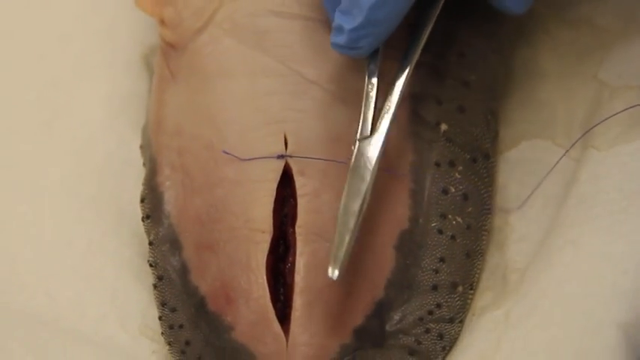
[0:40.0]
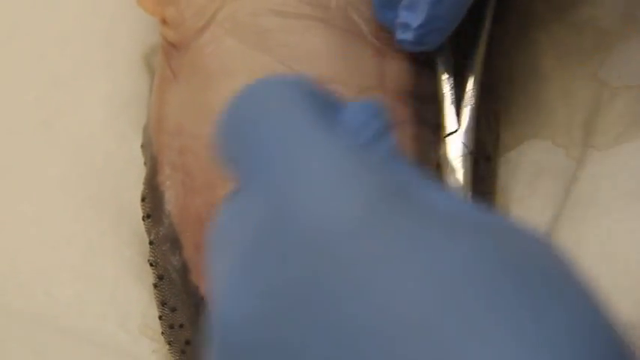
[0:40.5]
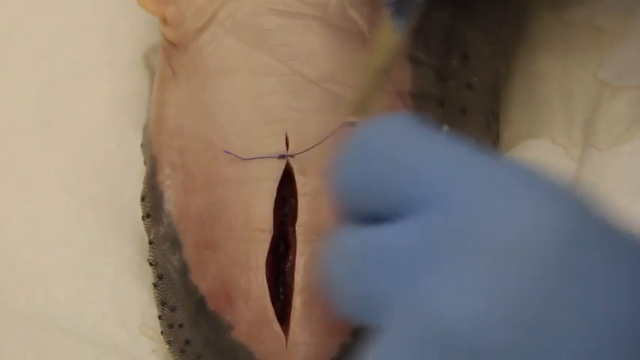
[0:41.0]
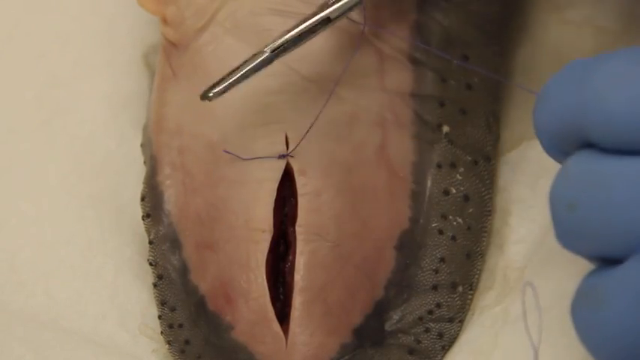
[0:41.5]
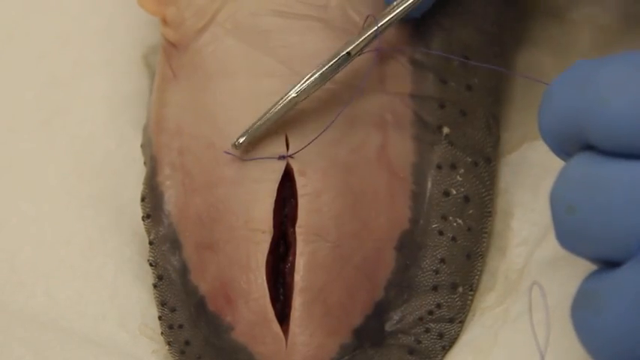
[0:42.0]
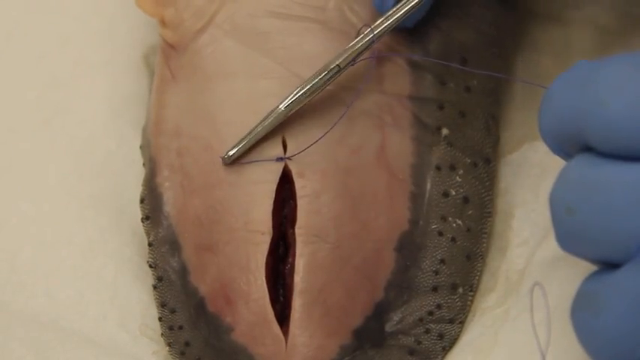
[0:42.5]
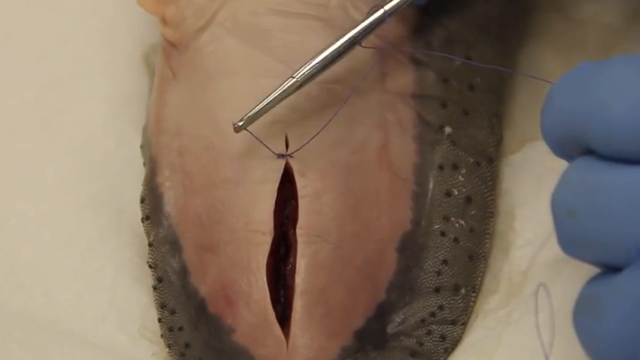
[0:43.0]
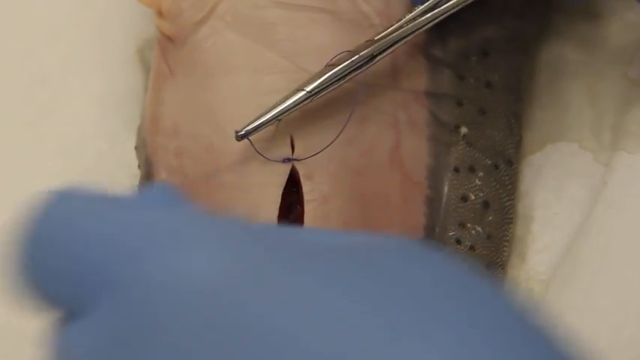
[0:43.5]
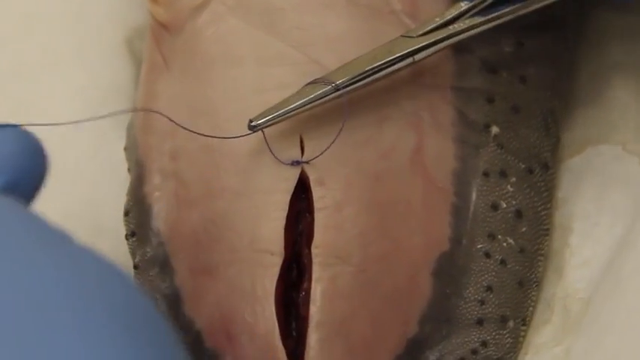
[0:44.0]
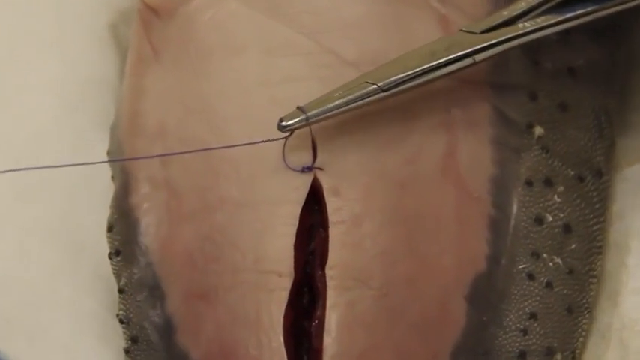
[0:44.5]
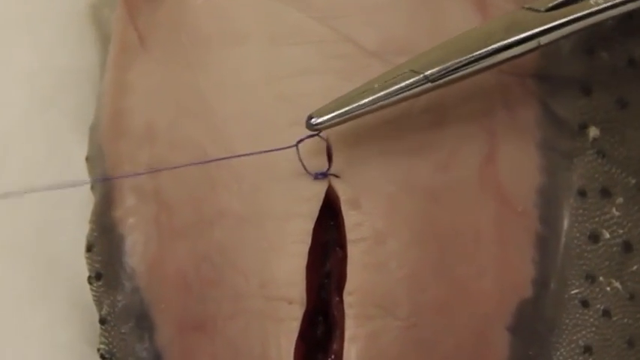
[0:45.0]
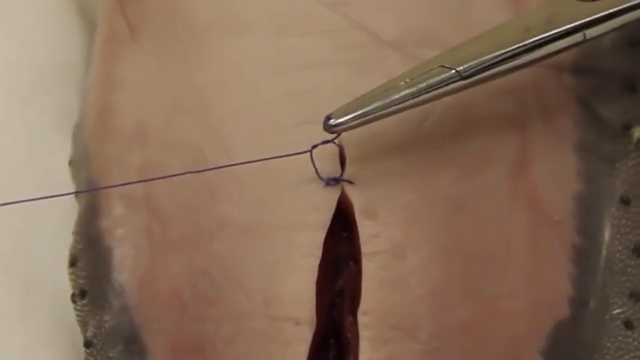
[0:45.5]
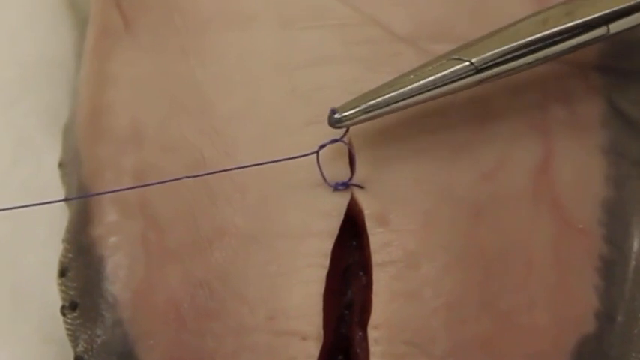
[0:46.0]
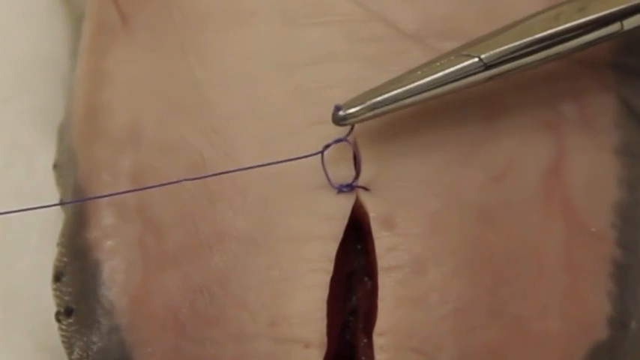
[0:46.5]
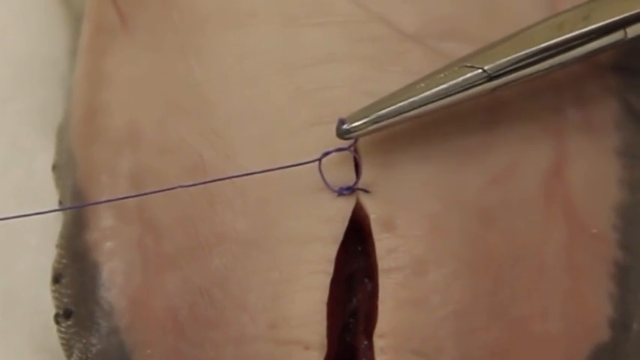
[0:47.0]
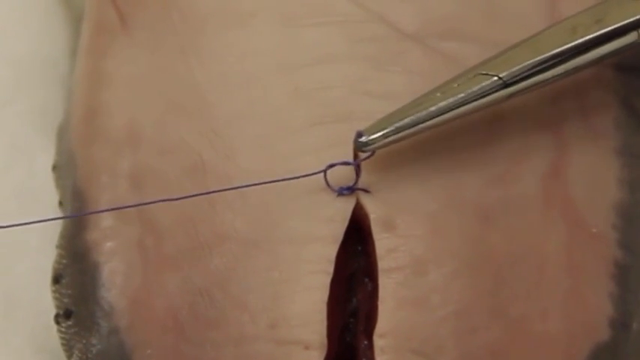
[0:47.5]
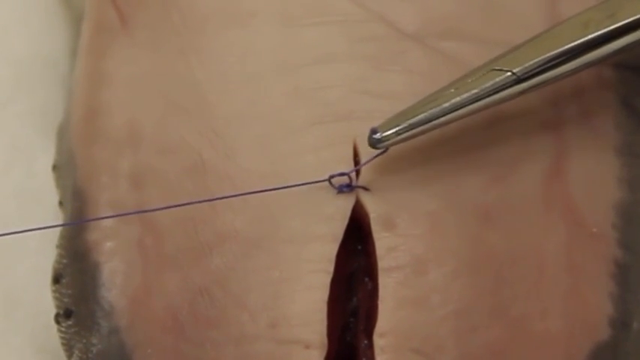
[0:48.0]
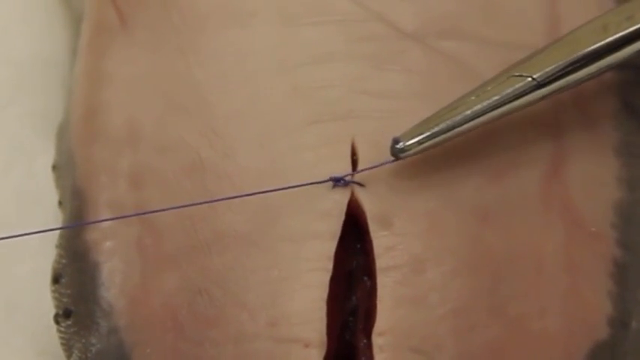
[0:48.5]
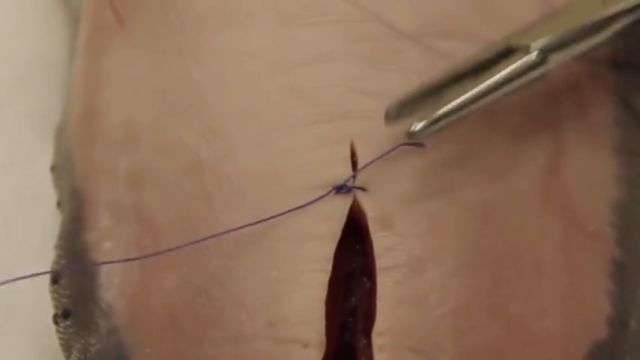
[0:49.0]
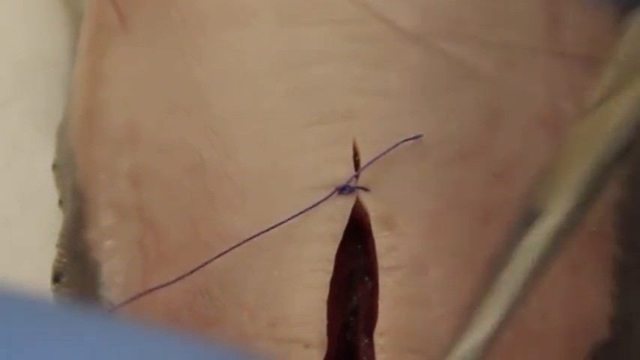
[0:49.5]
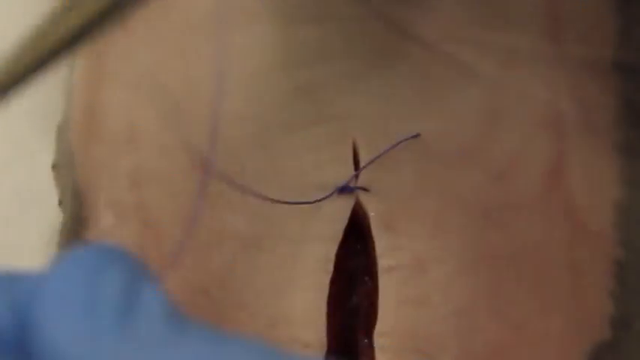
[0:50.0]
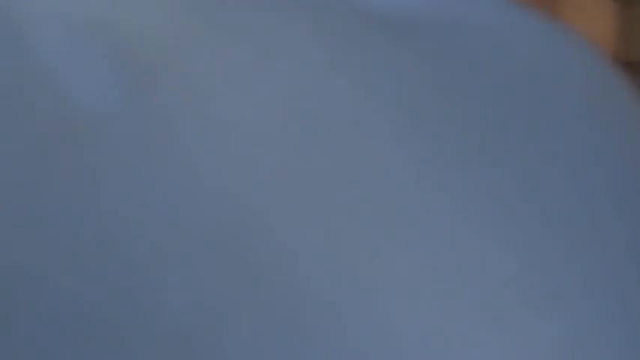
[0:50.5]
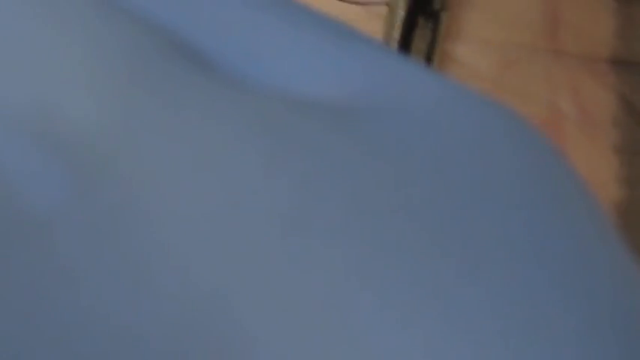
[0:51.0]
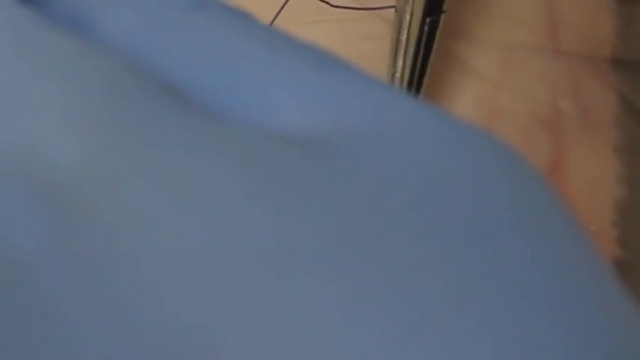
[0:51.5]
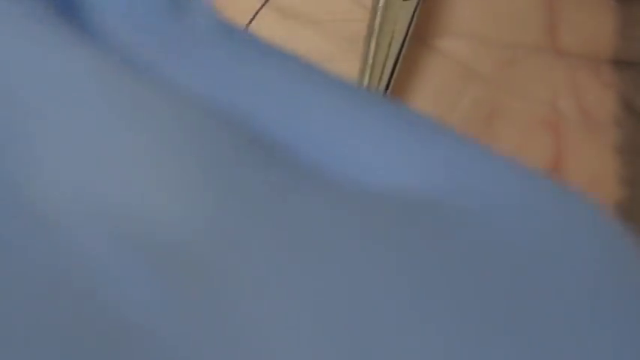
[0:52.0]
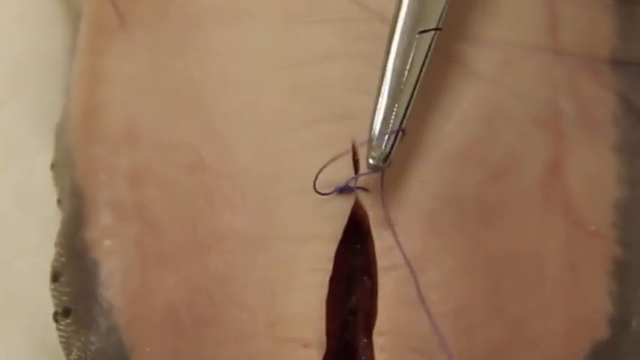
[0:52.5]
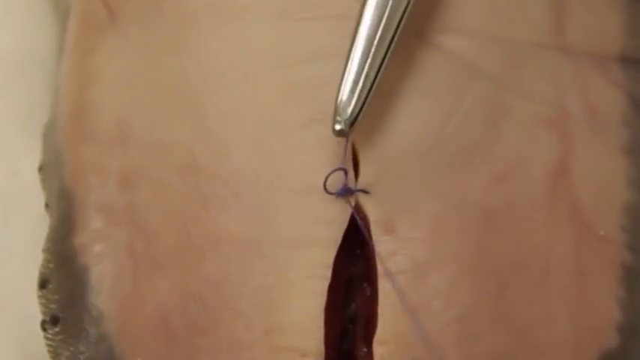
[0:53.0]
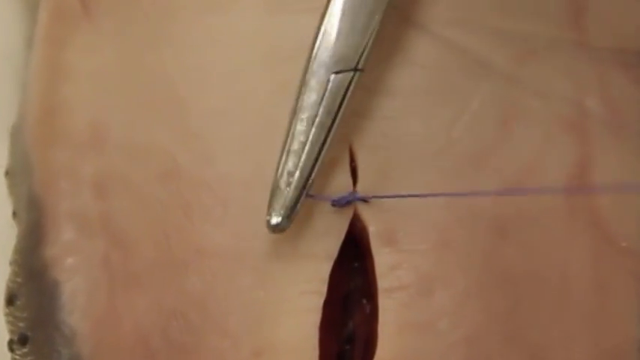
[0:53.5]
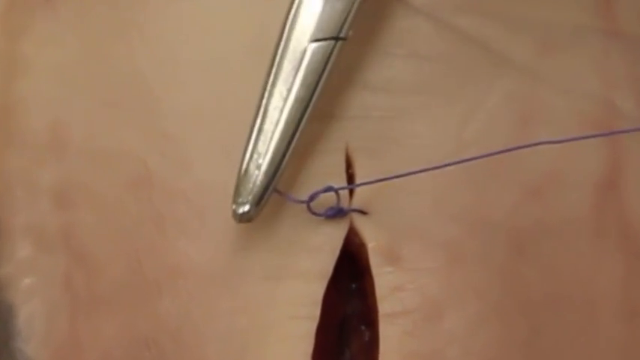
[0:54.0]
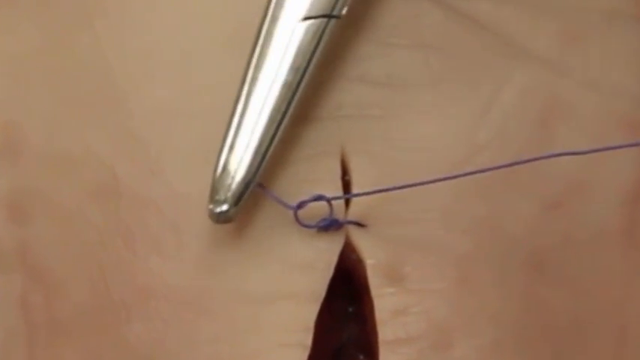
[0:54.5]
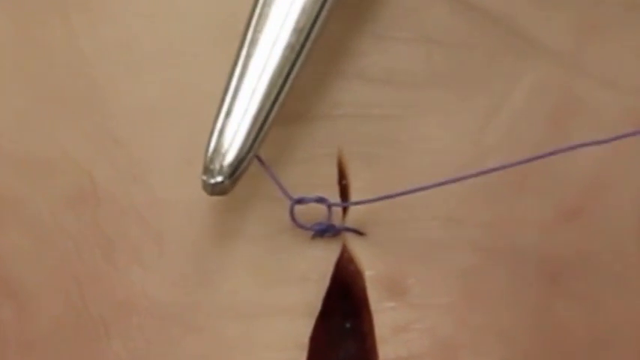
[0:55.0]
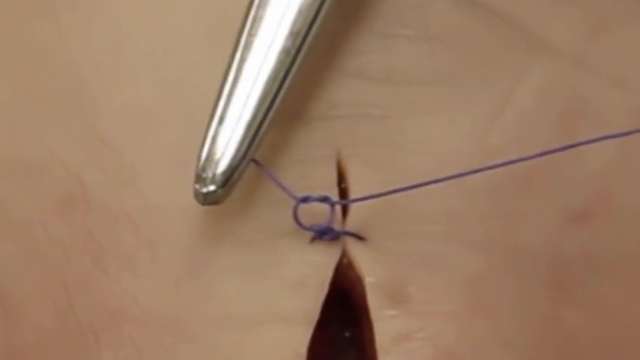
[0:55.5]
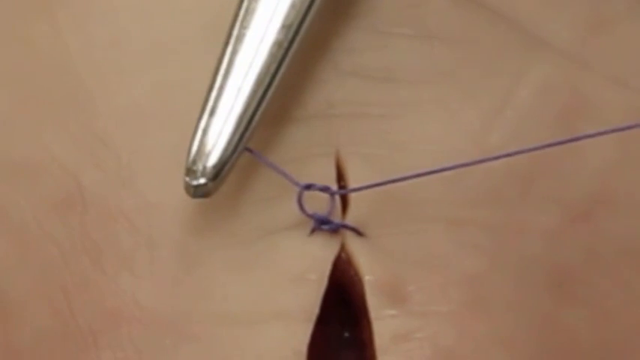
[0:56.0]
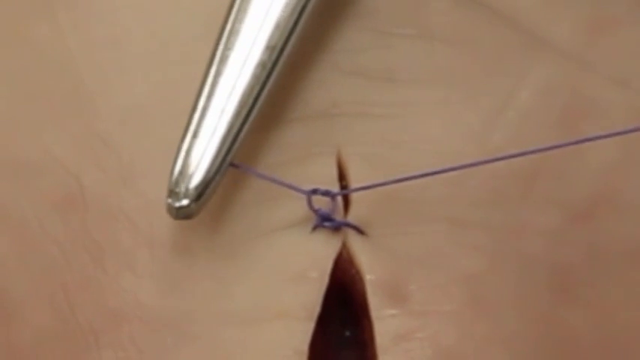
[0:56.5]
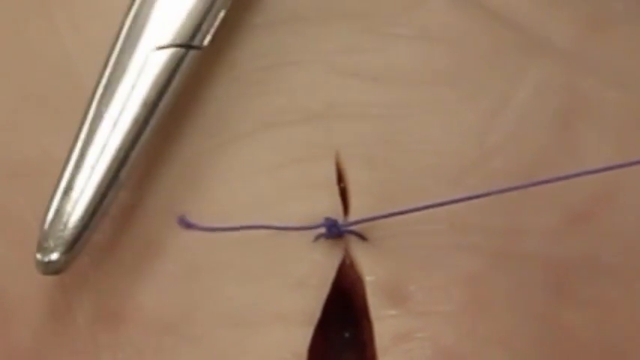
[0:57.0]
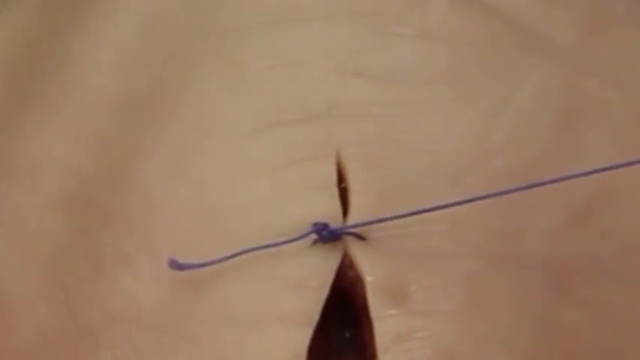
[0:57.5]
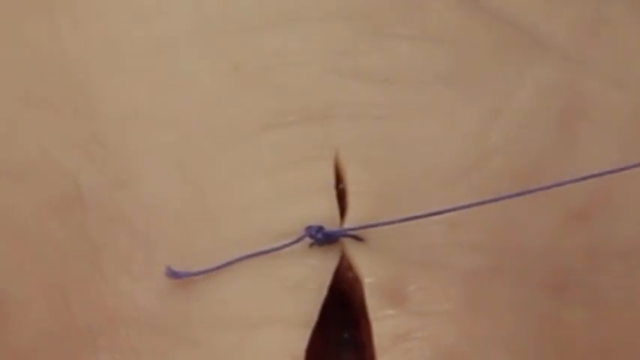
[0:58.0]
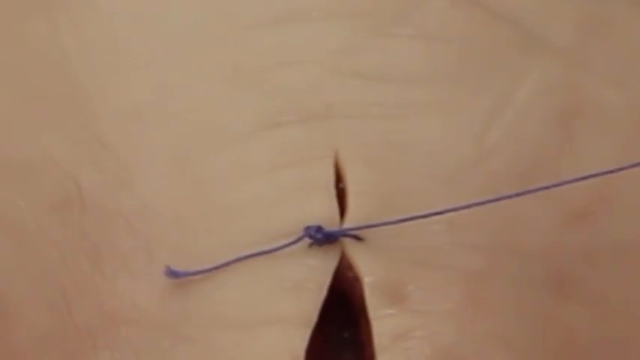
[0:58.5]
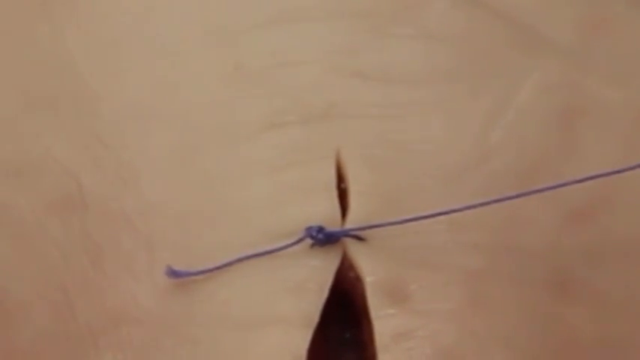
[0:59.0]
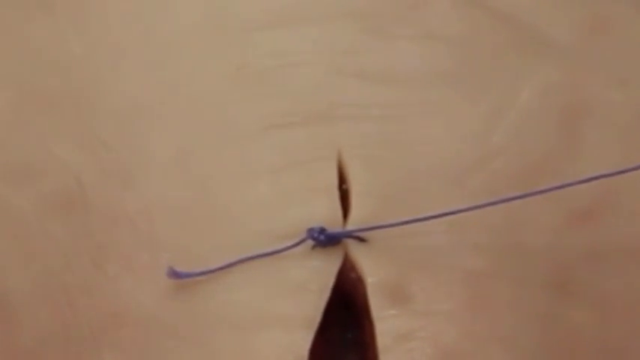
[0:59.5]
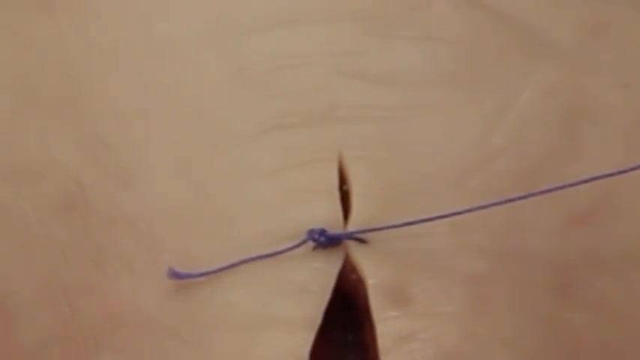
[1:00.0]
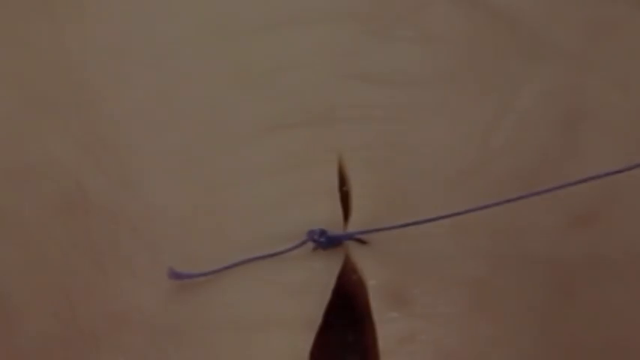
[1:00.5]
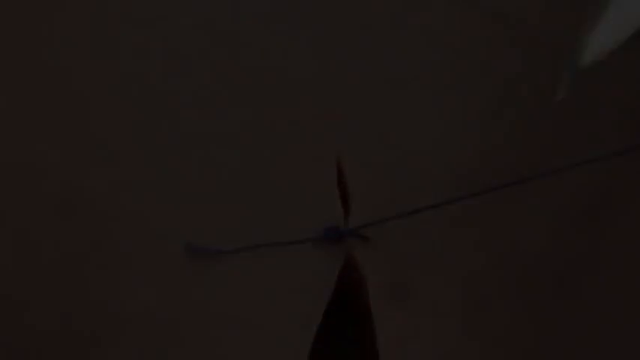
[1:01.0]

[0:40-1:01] The end of the first stitch is shown: the first double knot goes down, then the doctor wraps the suture around and ties it again, making a third knot on that first stitch. The stitch is very tight, and there is a small open piece of the wound above it. The video is designed to show how to do a square knot to tie off a suture on a cauterized surgical wound, apparently for a medical or nursing student. The suture is a purple string and looks like a synthetic stitch rather than catgut.